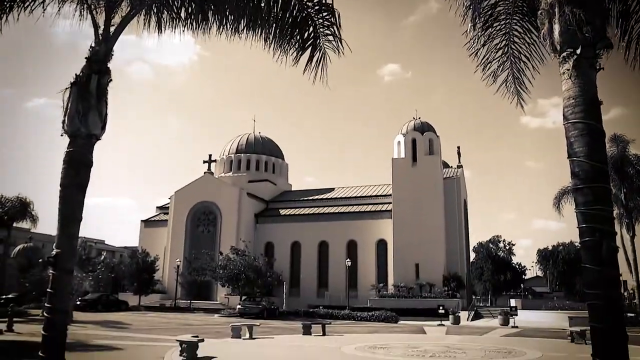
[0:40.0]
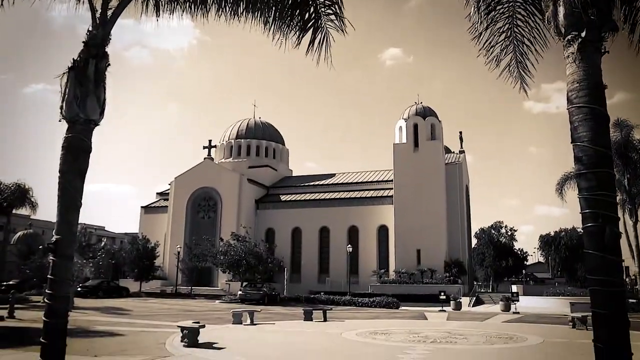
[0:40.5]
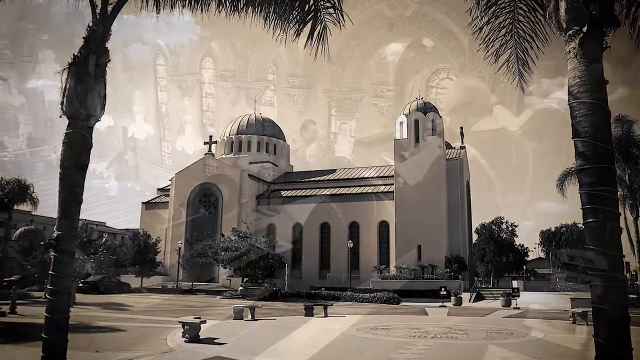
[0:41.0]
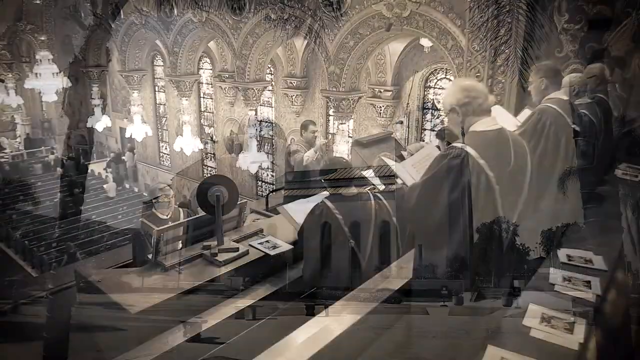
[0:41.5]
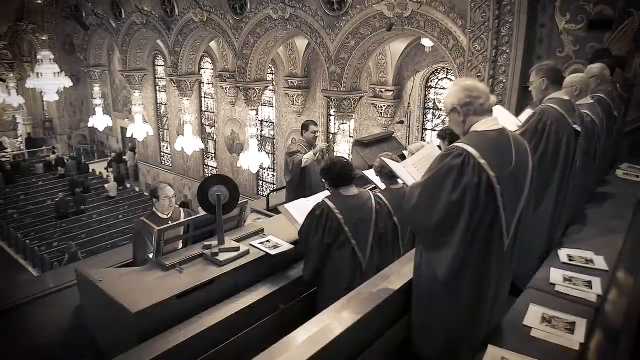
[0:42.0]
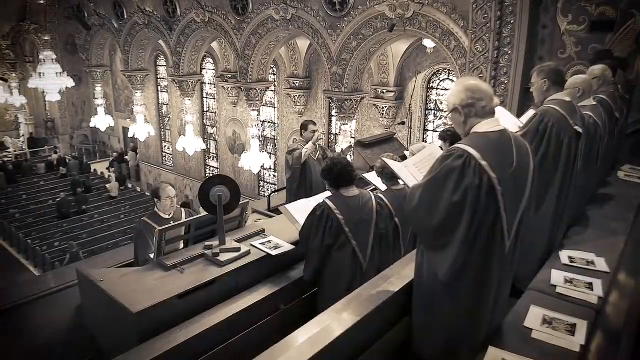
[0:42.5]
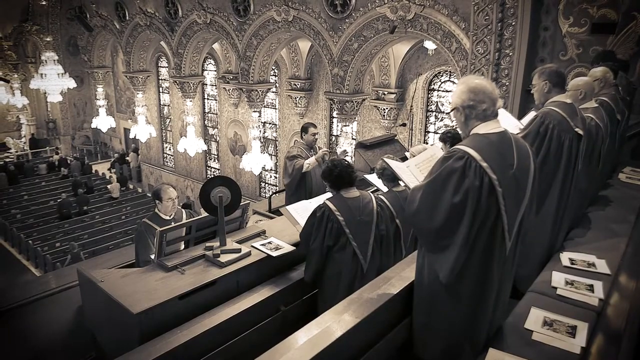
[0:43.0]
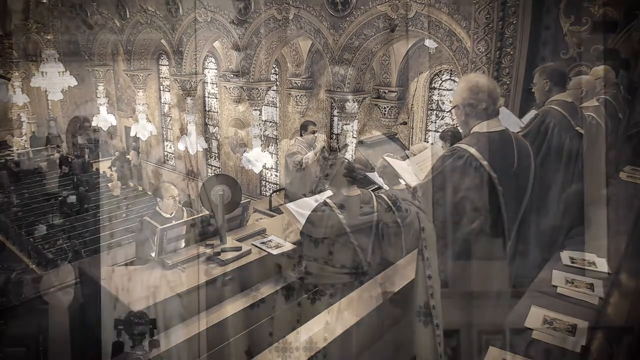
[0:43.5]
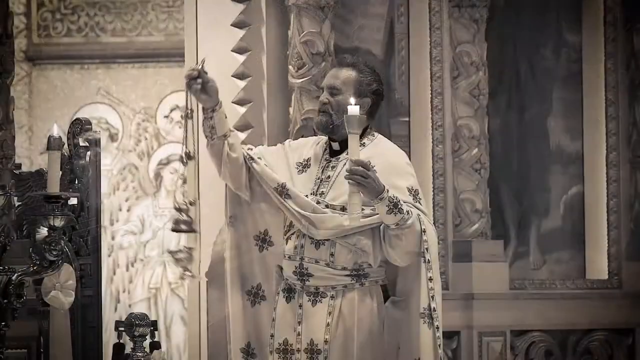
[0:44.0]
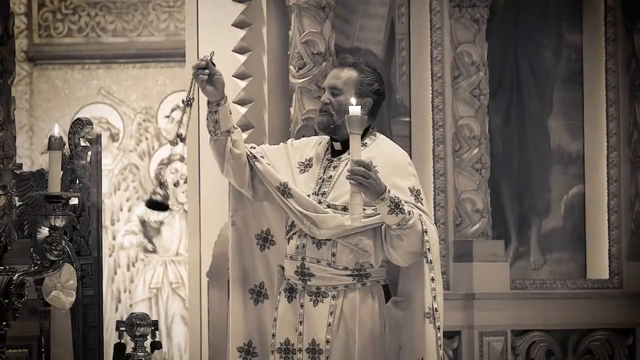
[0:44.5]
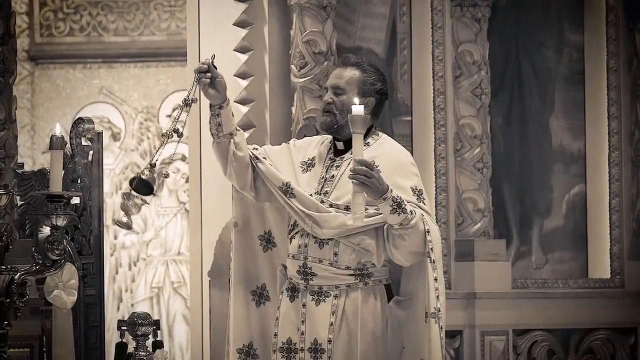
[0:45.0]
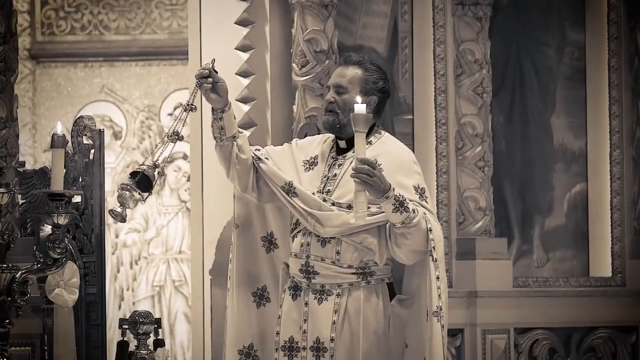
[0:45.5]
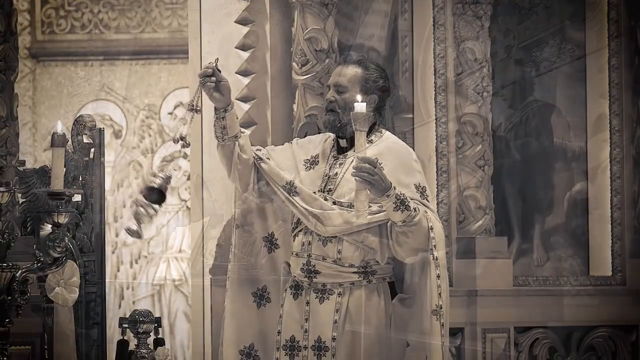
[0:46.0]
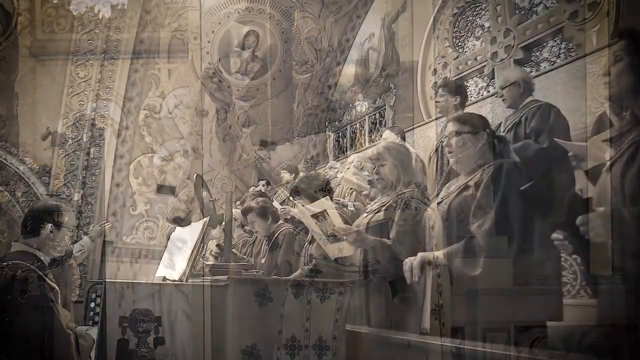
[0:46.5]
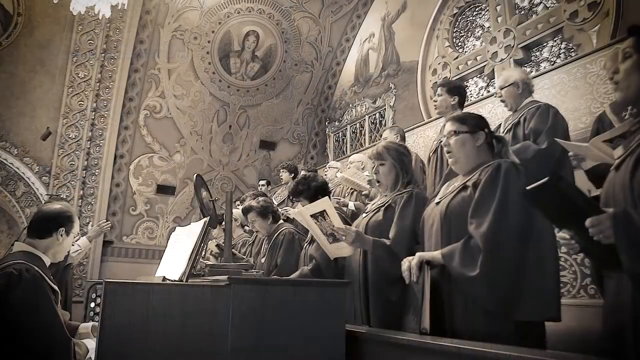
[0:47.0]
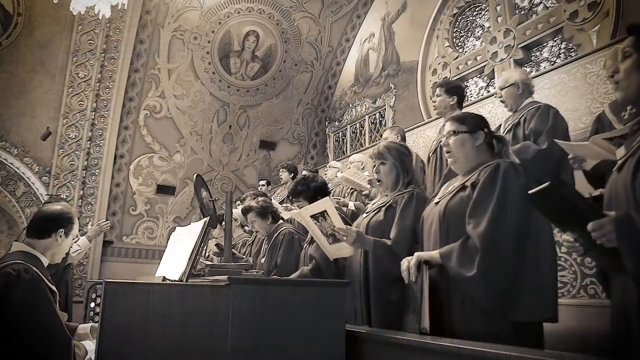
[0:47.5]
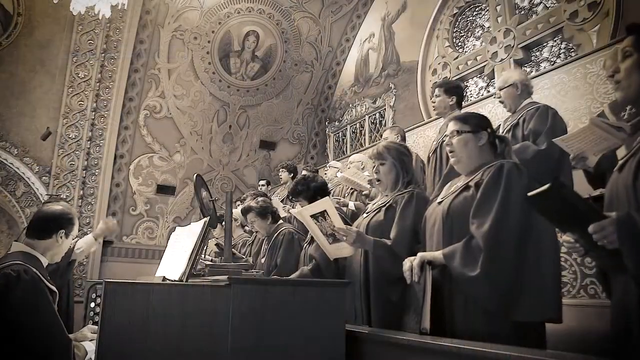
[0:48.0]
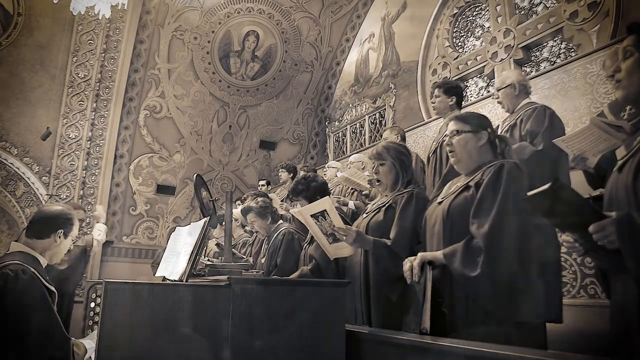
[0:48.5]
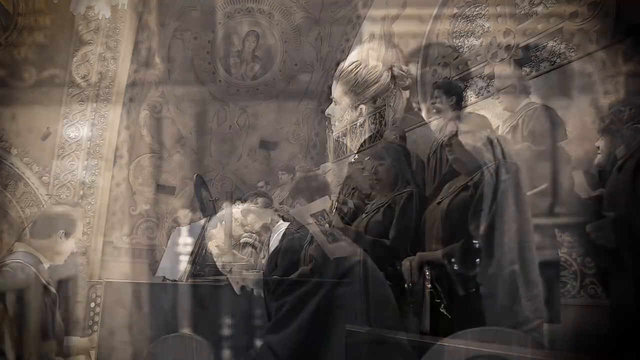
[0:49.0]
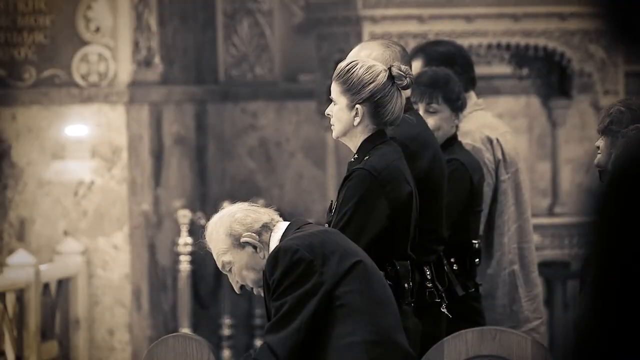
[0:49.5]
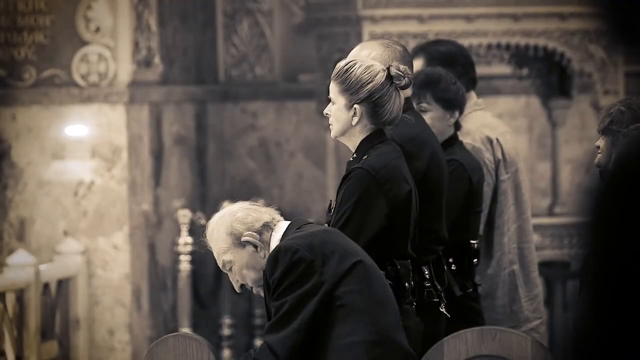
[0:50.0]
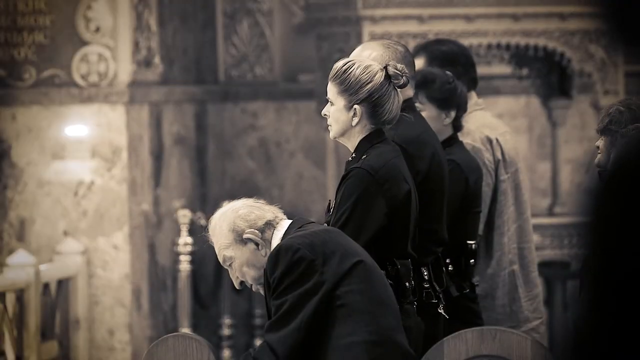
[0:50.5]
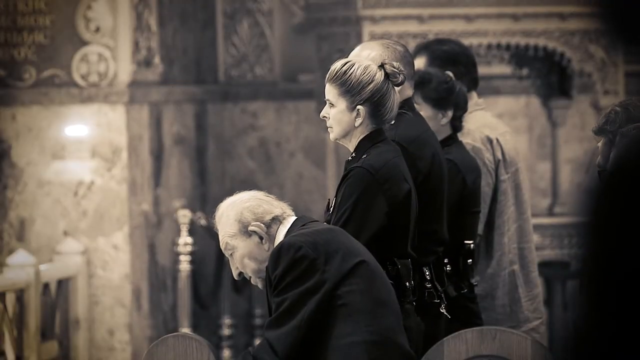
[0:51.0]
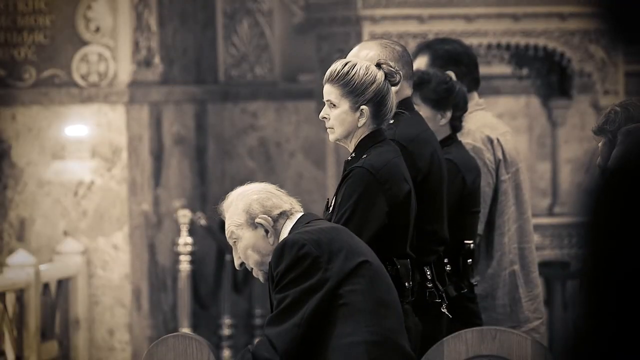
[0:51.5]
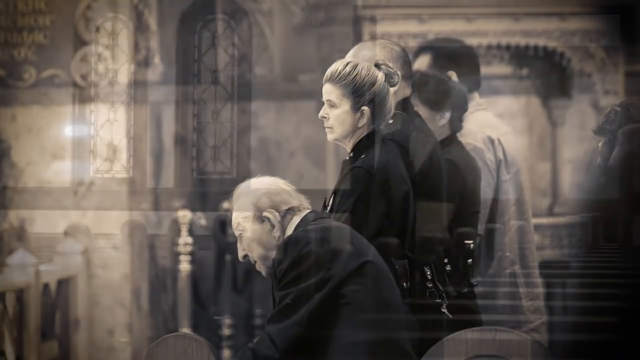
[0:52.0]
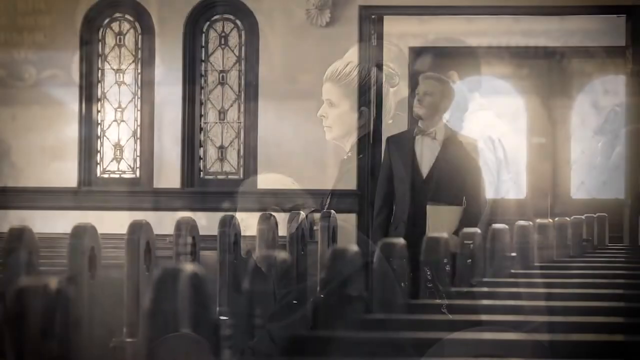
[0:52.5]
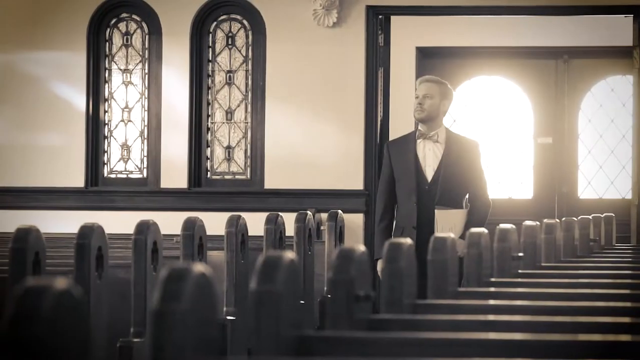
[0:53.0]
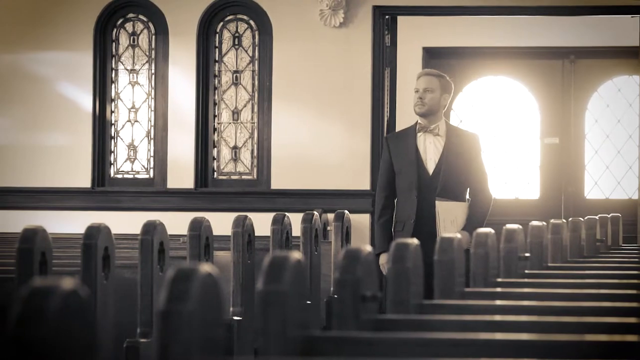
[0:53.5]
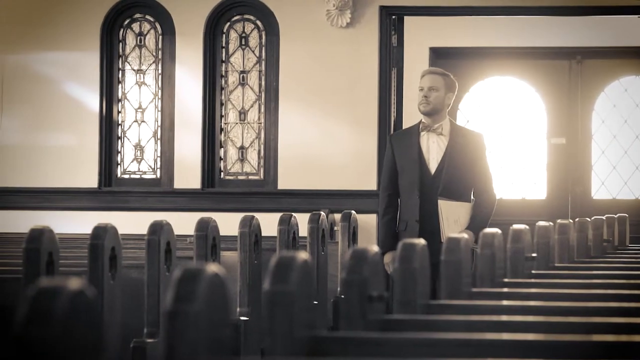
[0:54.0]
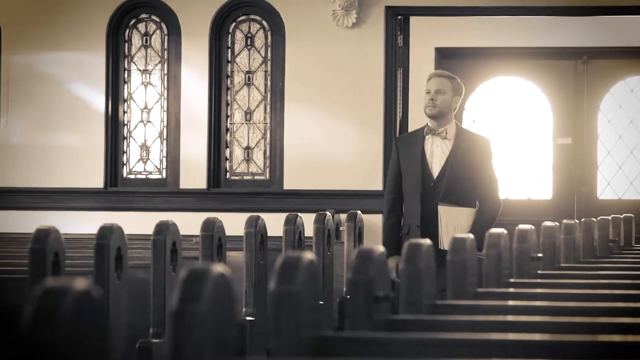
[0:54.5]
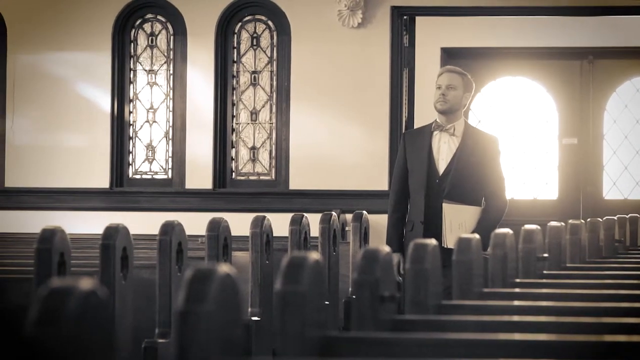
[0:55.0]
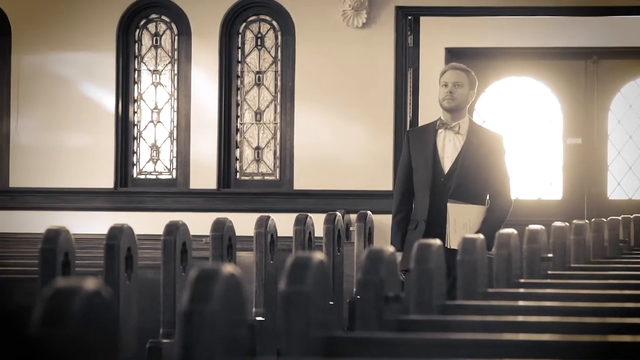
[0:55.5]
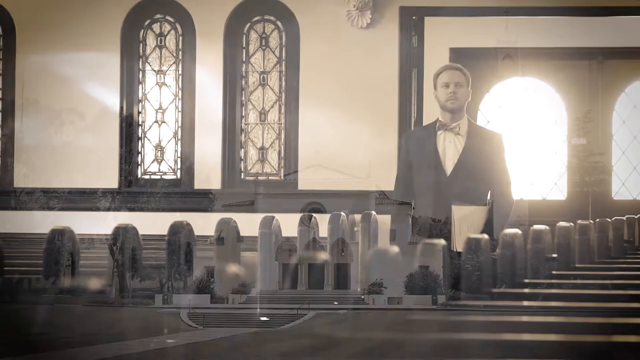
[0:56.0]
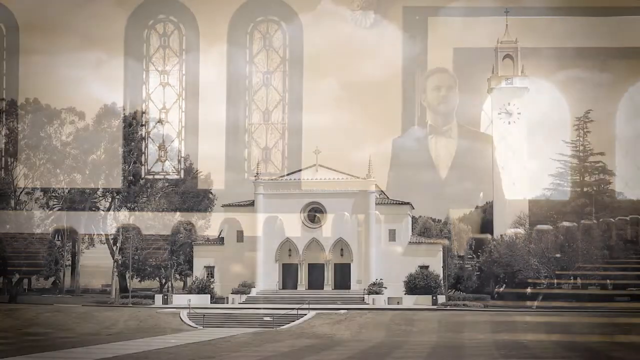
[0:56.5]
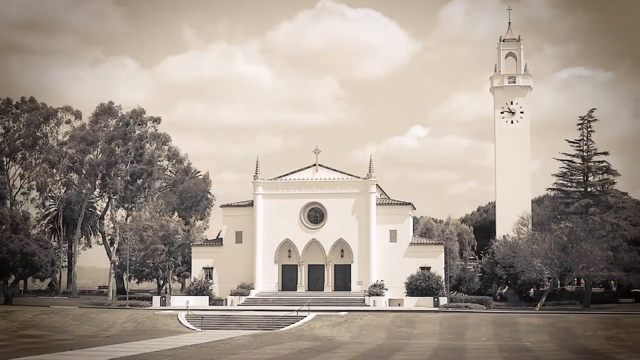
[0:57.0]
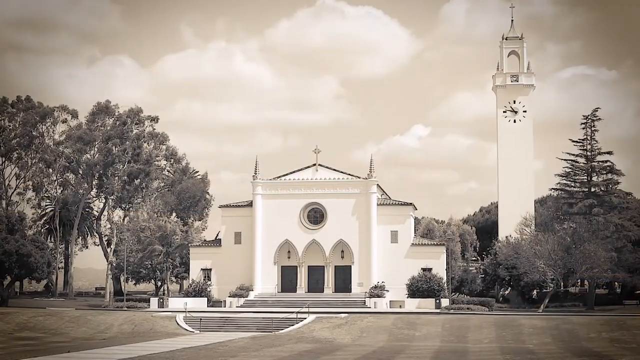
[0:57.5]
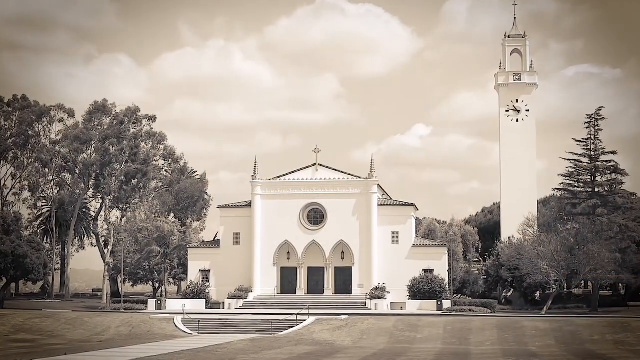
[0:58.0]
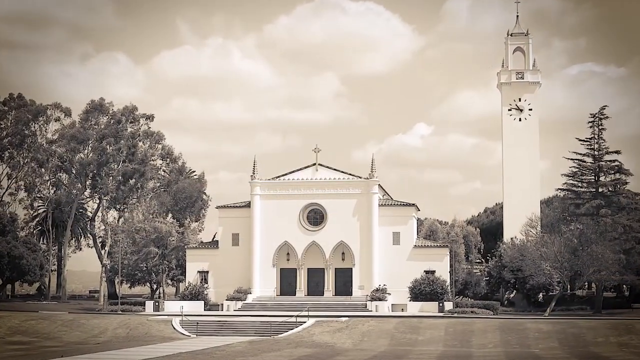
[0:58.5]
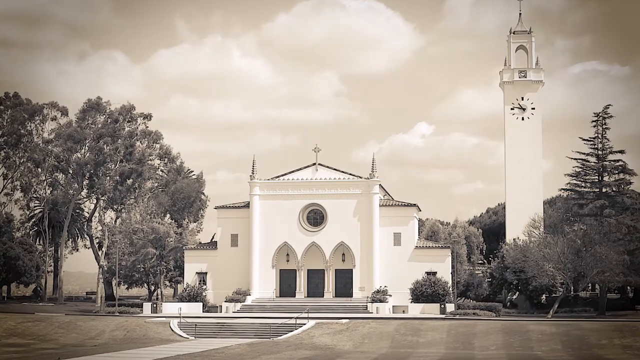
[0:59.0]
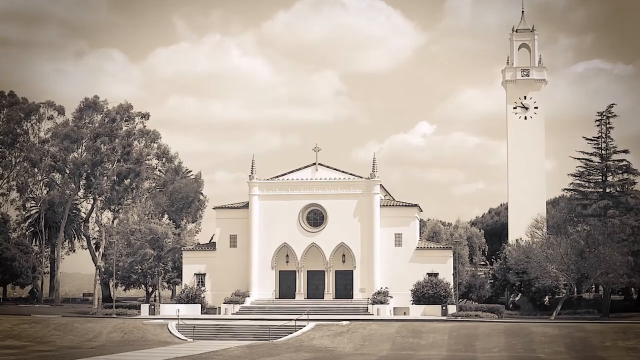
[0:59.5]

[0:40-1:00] A sepia-toned image shows a white, Spanish-style mission church with palm trees on either side in front of it. The sun is out, but the sky is sepia-toned. The view changes to the inside of a church, showing the upper risers of a singing choir, with men in the back and some women in the front, all wearing robes. An organist is in front of them on the left, and a choir director is on the right. A series of very ornate, tall arches runs down the right-hand side of the church, and below them are pews with some people in them. Then a priest in a white vestment waves a censer. The image returns to the choir, now seen from below looking up, with women in the front singing and the organist playing the piano. Next is a row of parishioners, with an old man who is bent over in the front. The image changes to a younger man wearing a tuxedo and a bow tie, carrying a folder under his left arm, who walks very erectly up the center aisle between two pews. Then a second church appears; the image is white, with three Moorish arches in the front.